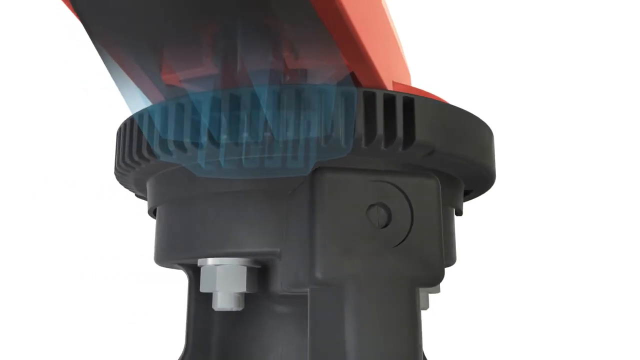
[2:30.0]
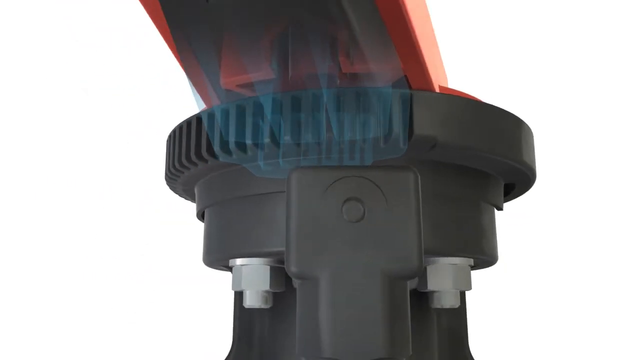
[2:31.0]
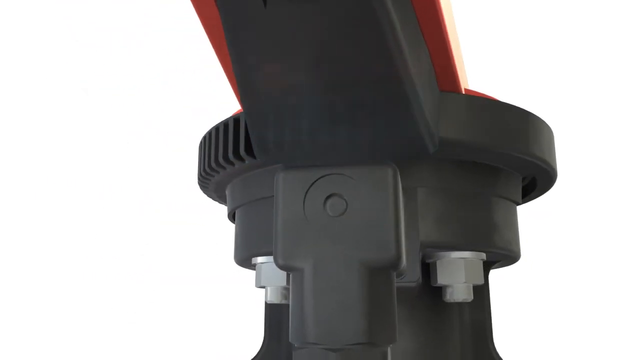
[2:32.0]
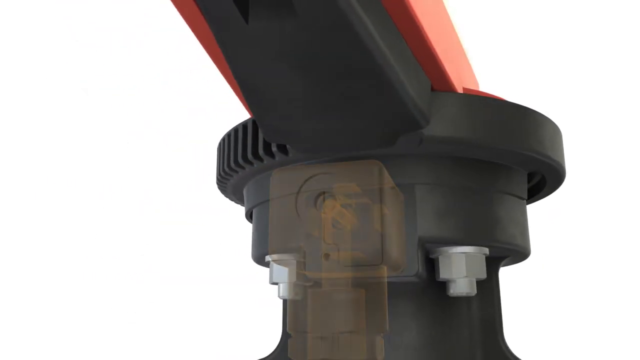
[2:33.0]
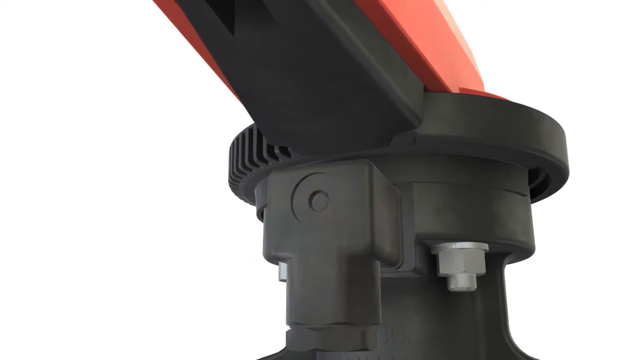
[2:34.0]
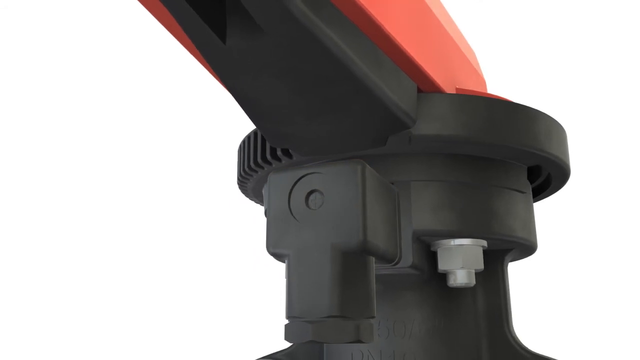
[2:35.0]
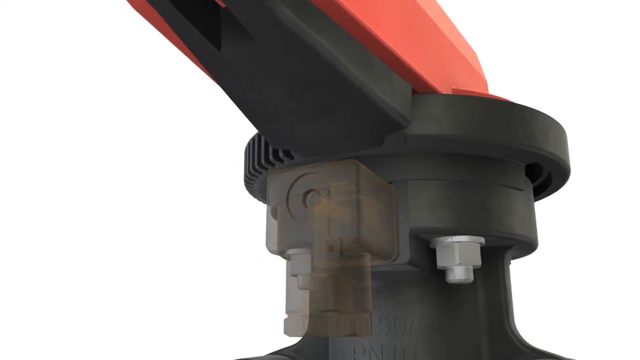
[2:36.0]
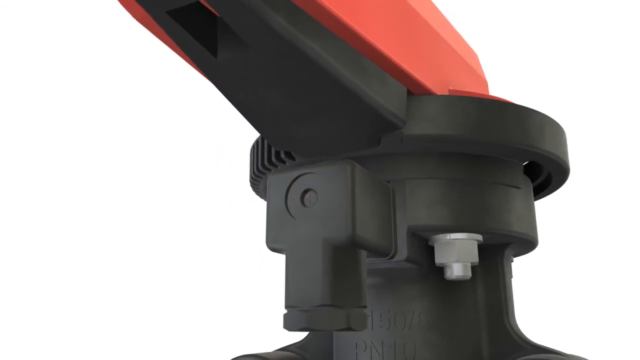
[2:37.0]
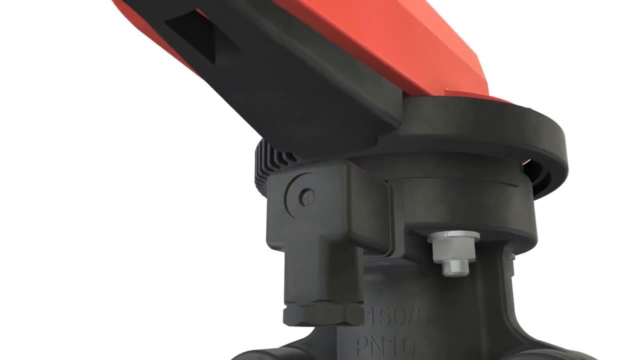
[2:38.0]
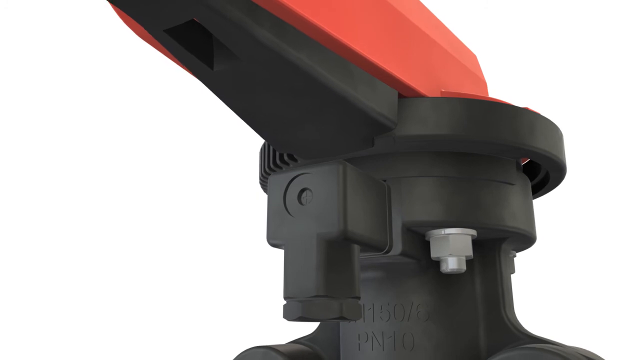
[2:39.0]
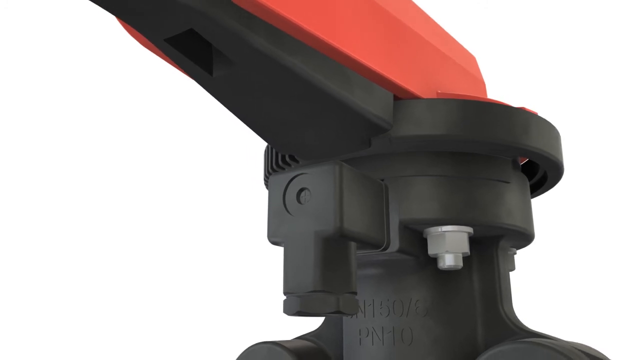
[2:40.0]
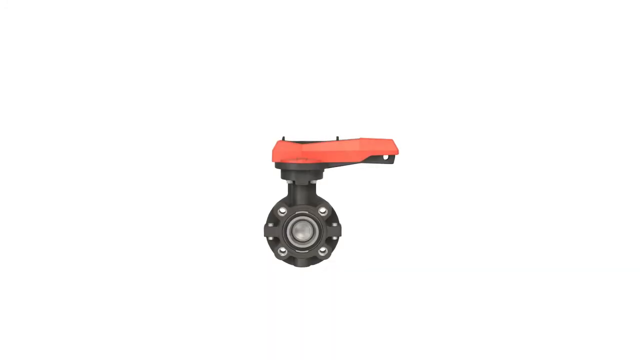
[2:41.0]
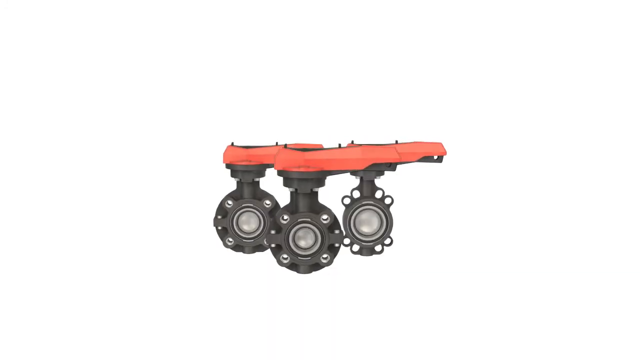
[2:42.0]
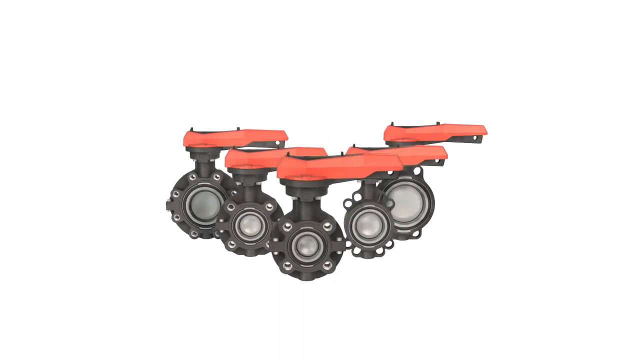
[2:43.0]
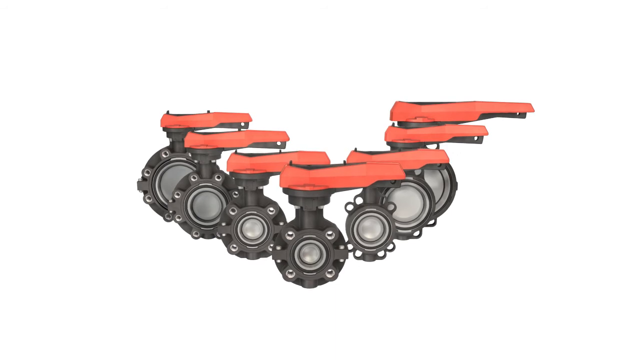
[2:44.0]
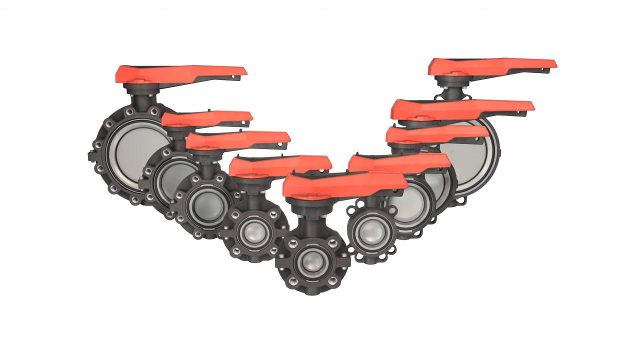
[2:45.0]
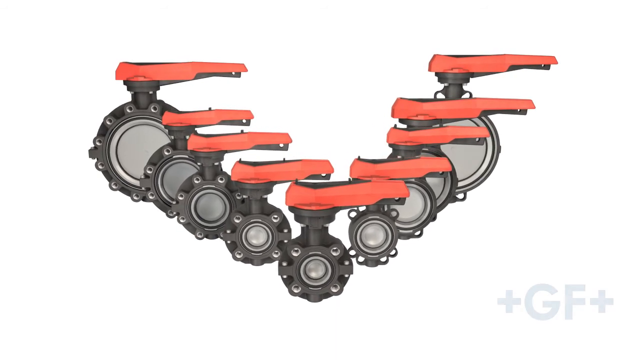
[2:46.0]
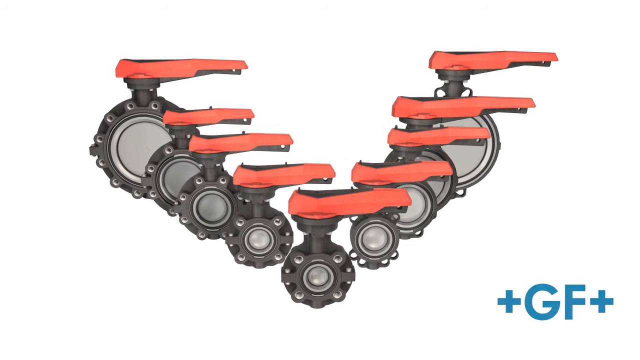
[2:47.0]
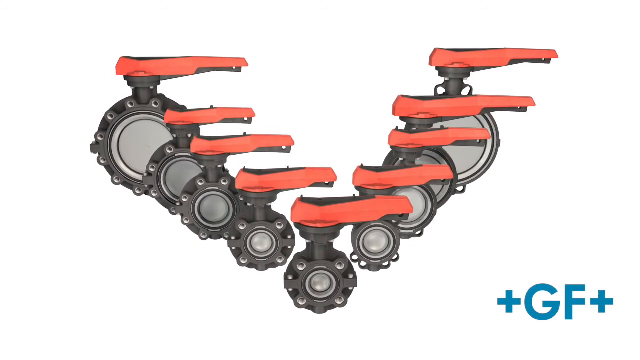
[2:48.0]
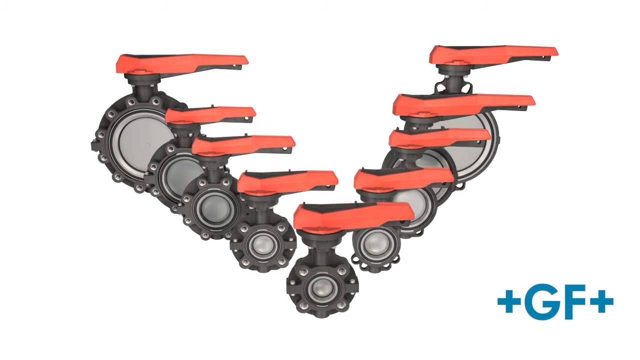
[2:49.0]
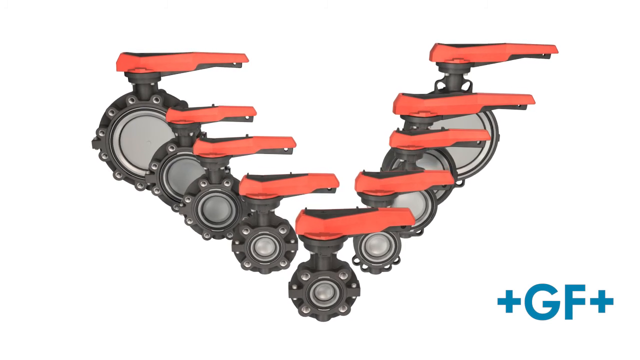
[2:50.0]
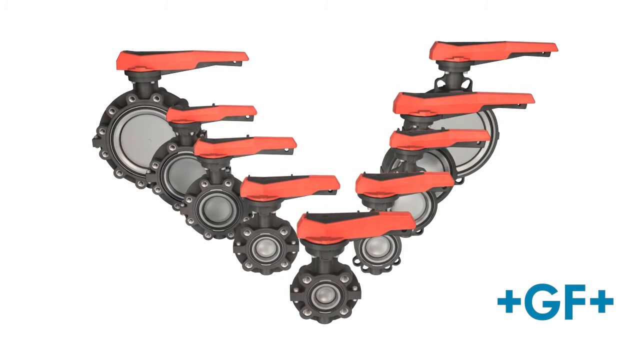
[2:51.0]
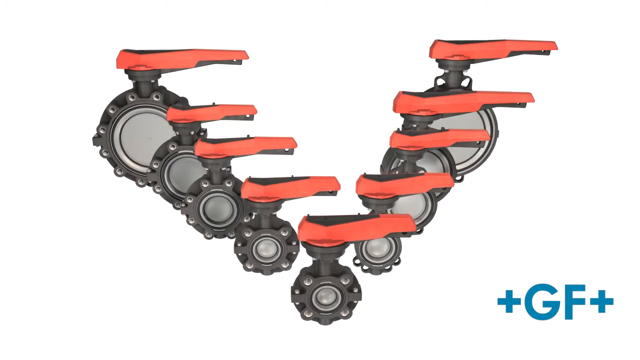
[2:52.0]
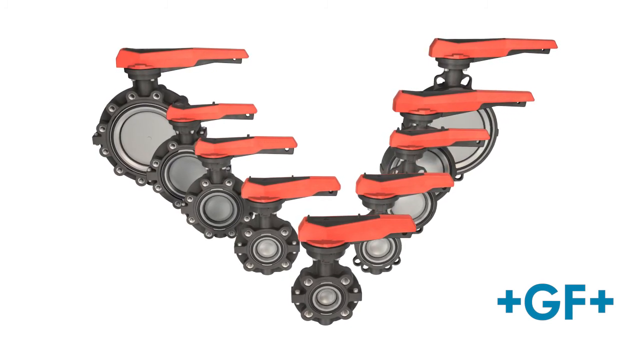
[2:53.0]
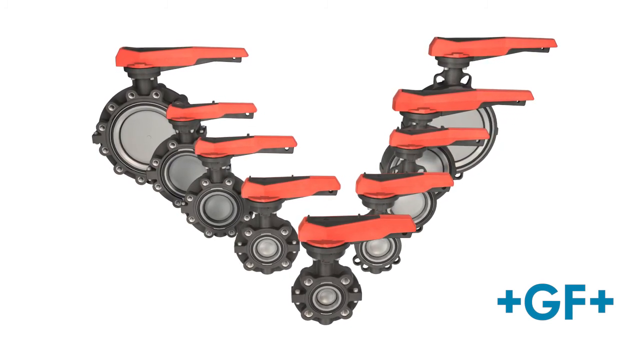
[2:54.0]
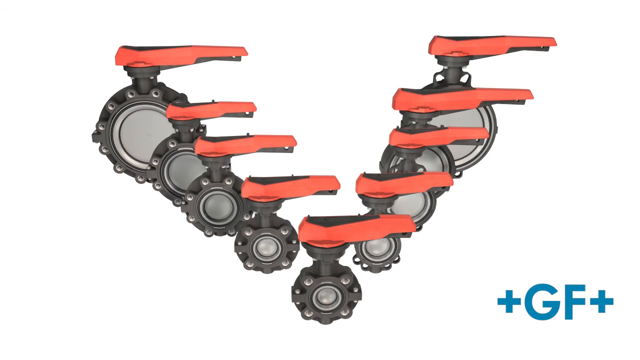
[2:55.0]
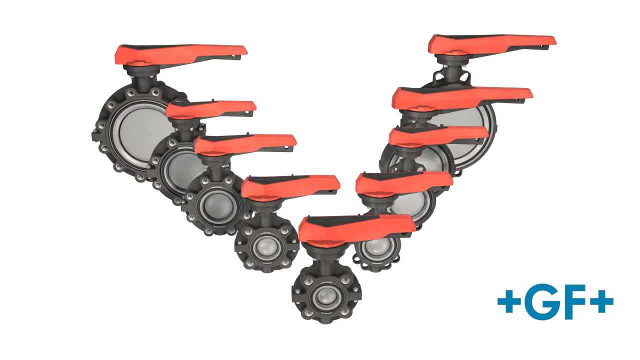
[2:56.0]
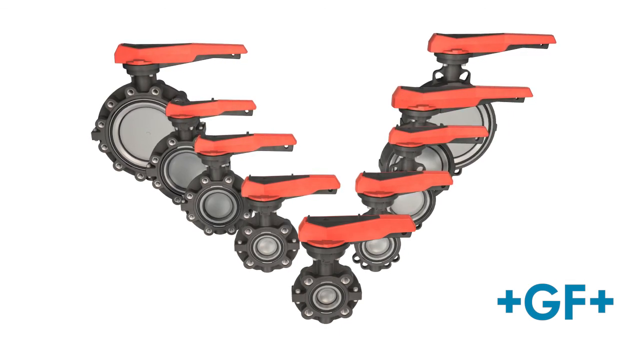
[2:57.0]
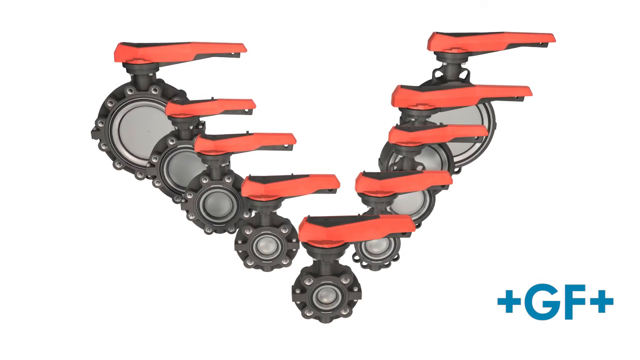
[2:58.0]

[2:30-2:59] The underside of the red handle is shown, and the black section below it is removed to show inside, highlighted in blue; indentations on the black circular piece under the red handle look like vents. The black handle part goes back on, and the black piece underneath flashes orange, giving a partial view inside it. There is some coding on the black piece under the handle. The view zooms out to show multiple iterations of the device: one in the centre and five more on each side behind it, making 11 in the shot. The GF and two plus symbols appear in the bottom right corner while the camera moves slightly up, showing that the devices at the back of the pyramid are much larger than those at the front, with the one in the middle at the front being the smallest.